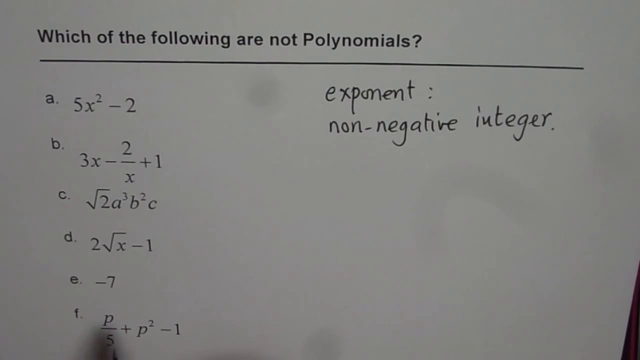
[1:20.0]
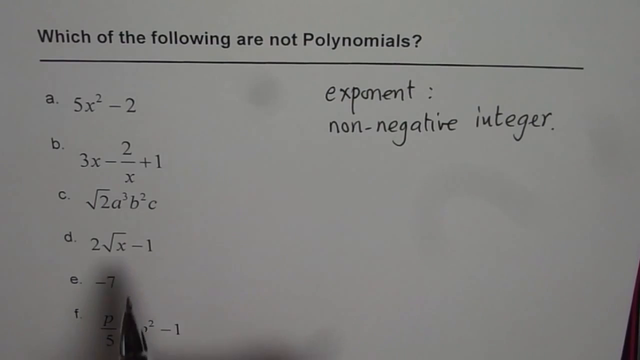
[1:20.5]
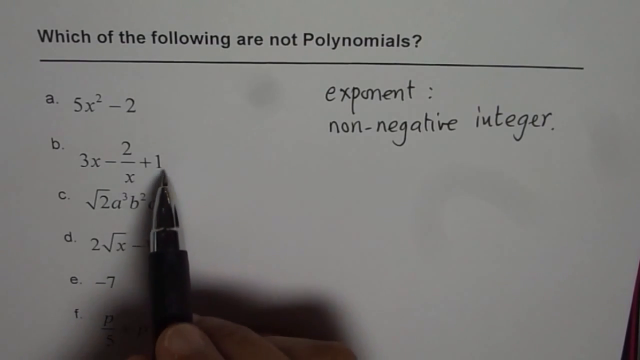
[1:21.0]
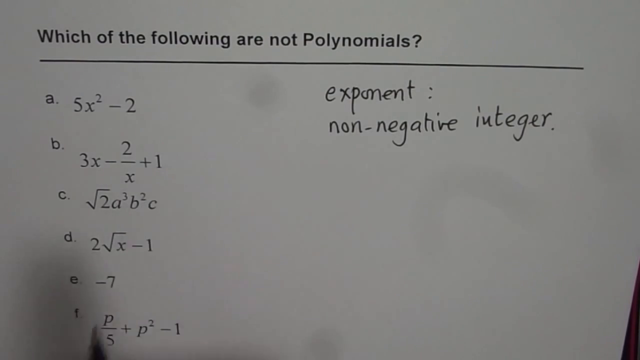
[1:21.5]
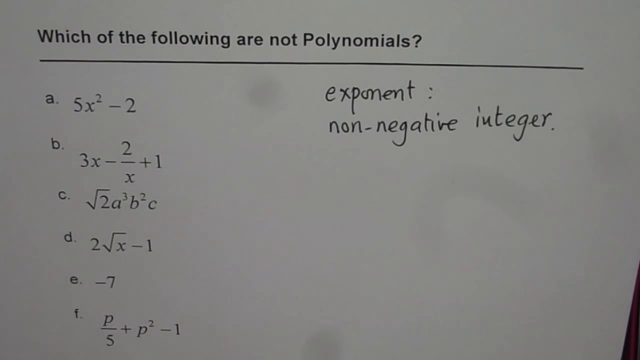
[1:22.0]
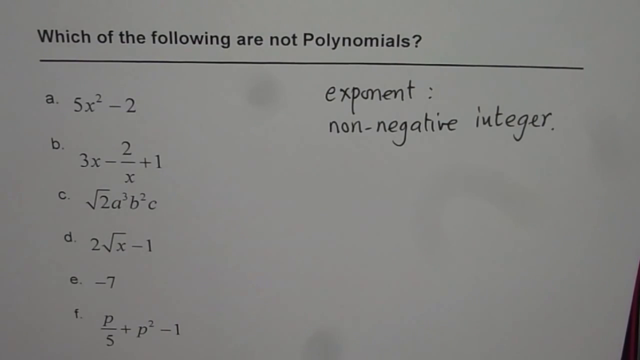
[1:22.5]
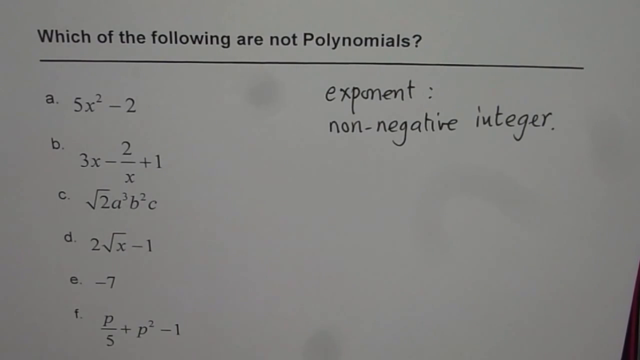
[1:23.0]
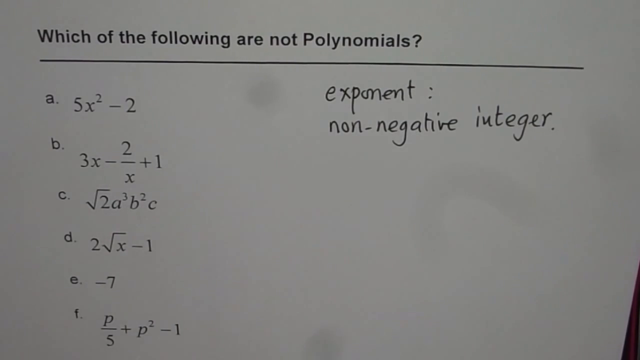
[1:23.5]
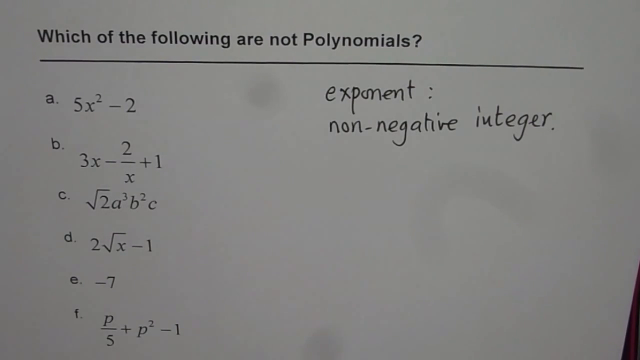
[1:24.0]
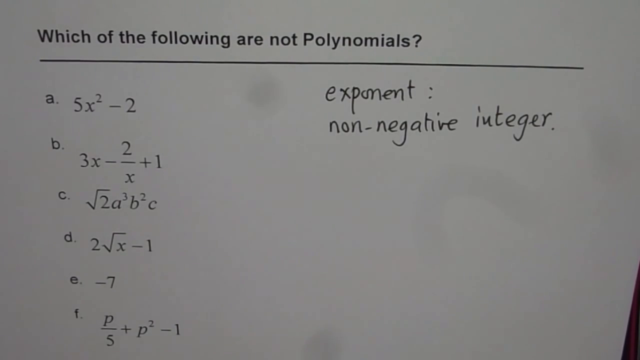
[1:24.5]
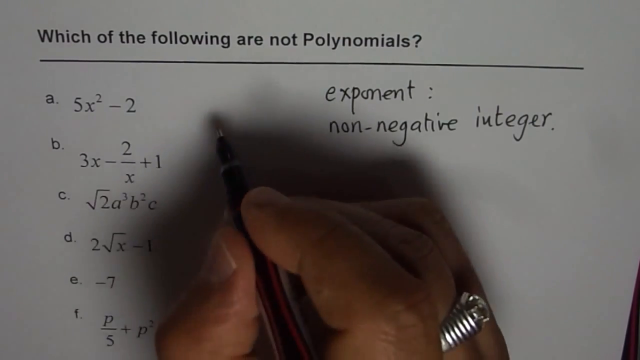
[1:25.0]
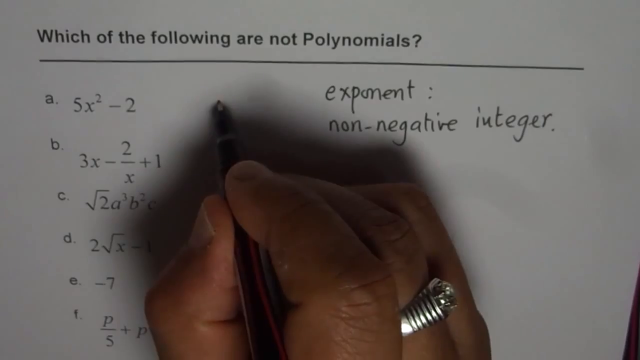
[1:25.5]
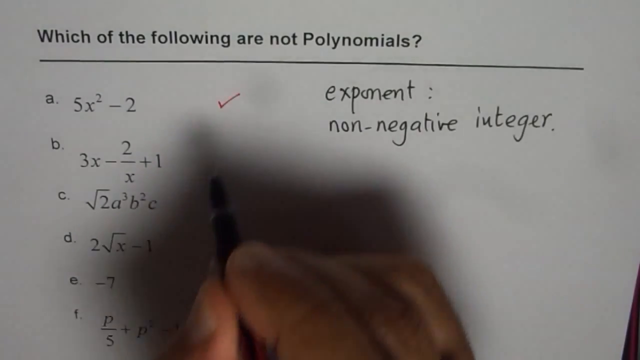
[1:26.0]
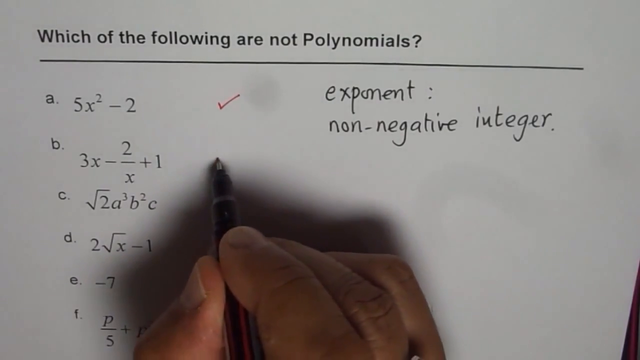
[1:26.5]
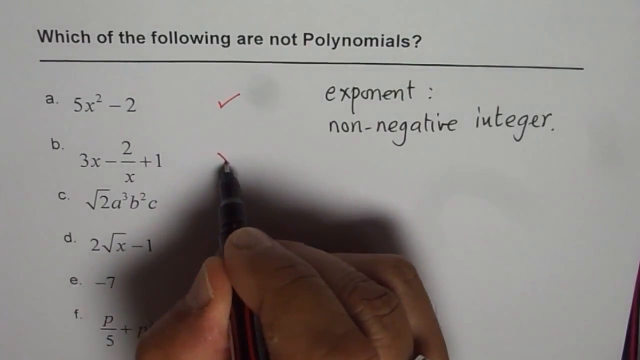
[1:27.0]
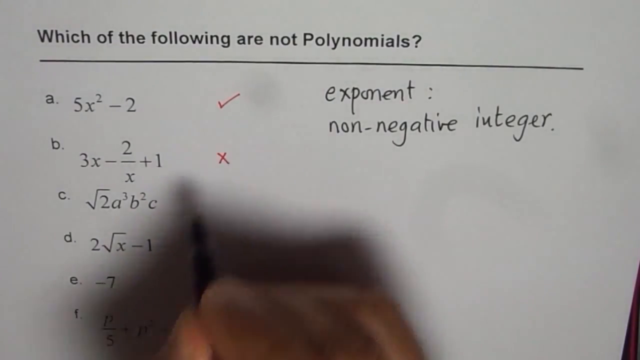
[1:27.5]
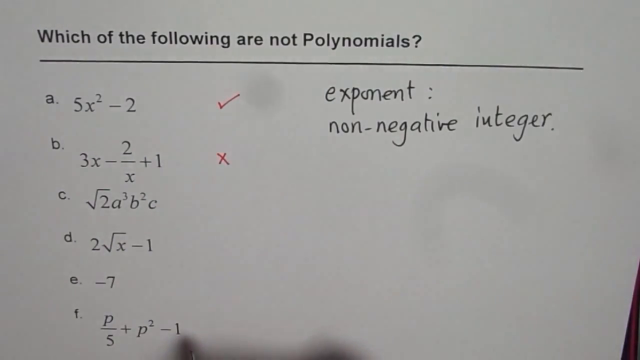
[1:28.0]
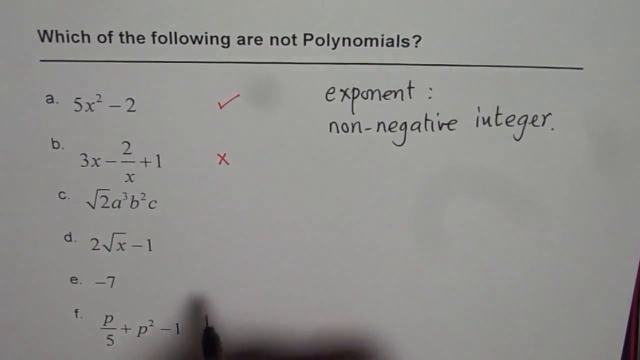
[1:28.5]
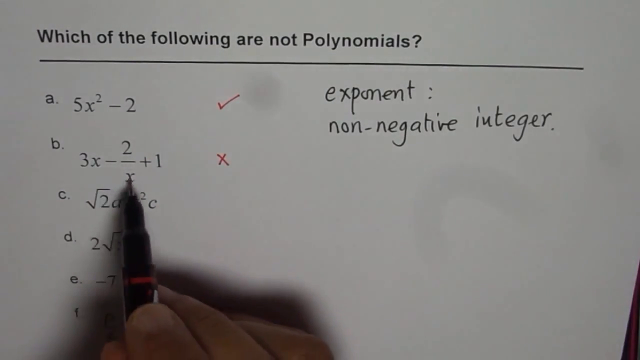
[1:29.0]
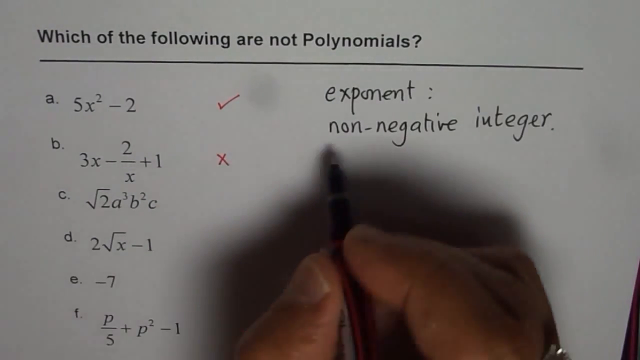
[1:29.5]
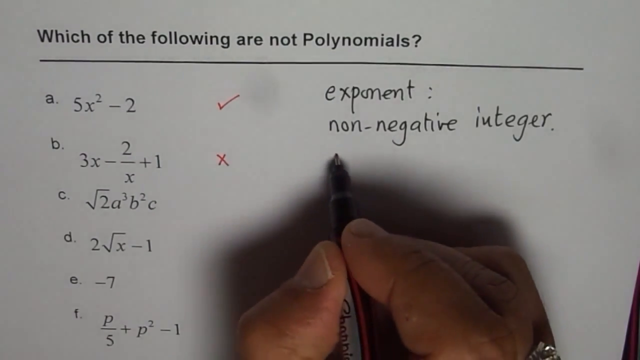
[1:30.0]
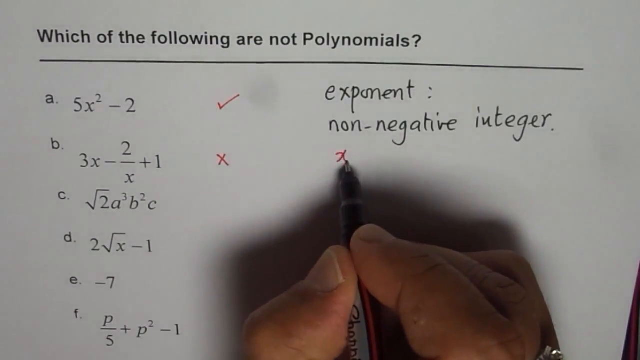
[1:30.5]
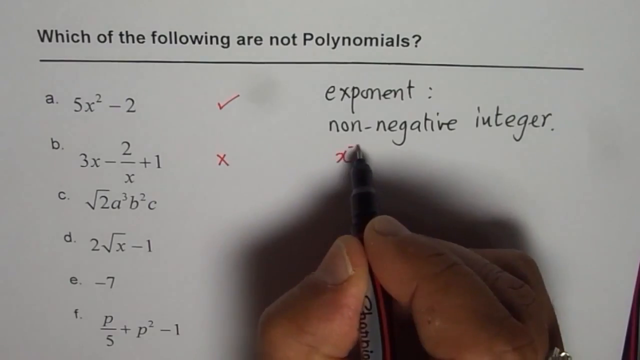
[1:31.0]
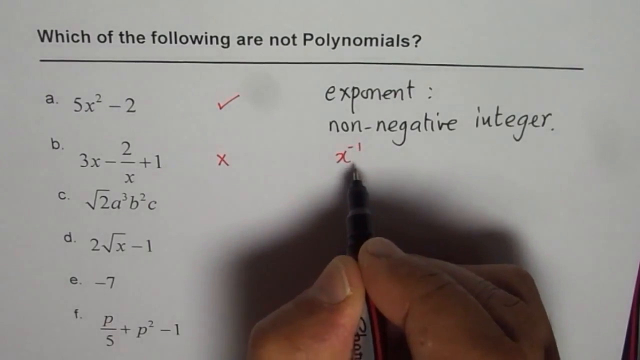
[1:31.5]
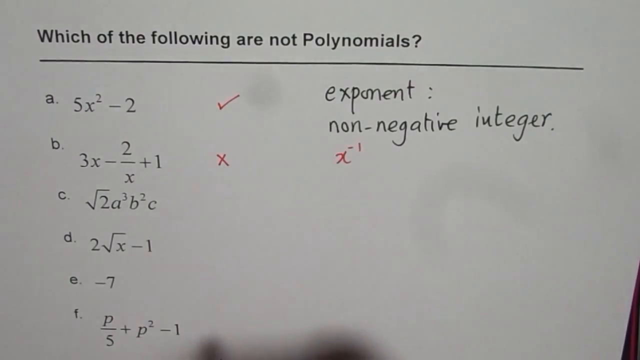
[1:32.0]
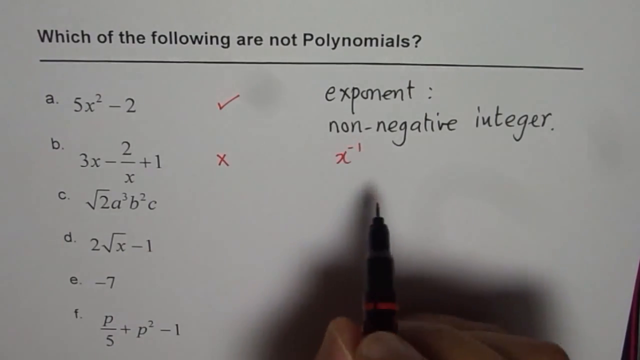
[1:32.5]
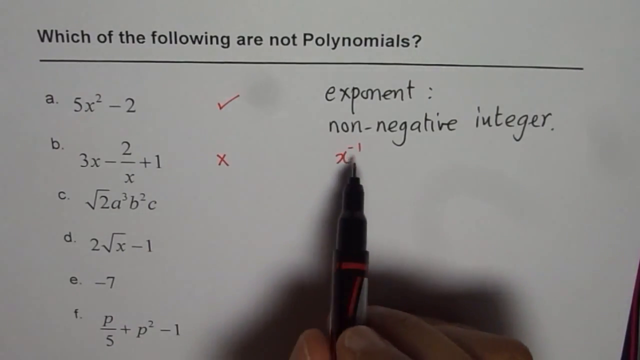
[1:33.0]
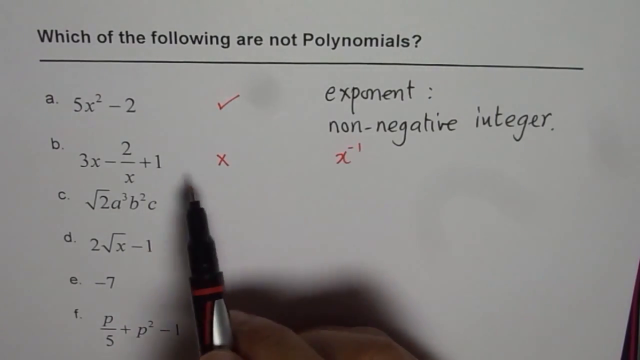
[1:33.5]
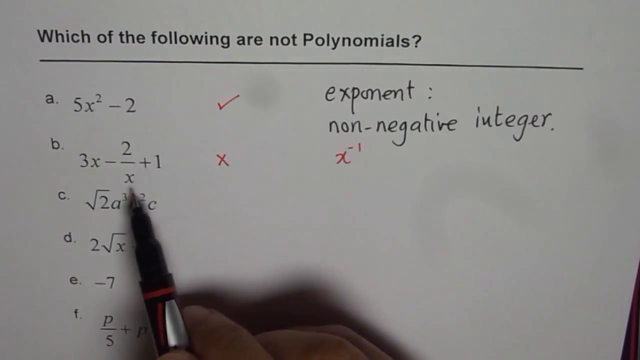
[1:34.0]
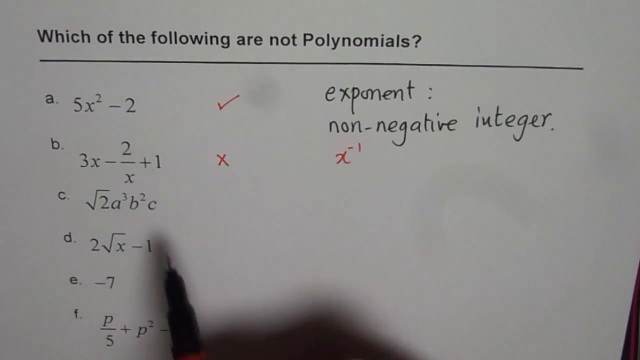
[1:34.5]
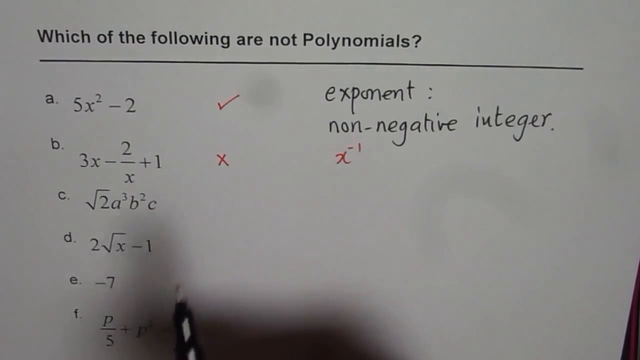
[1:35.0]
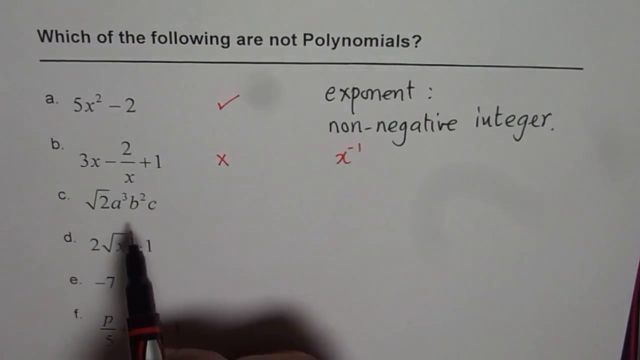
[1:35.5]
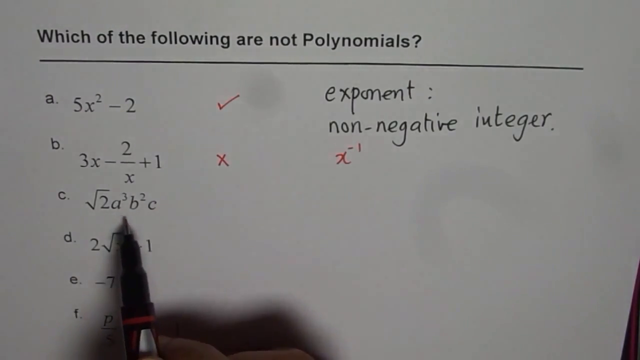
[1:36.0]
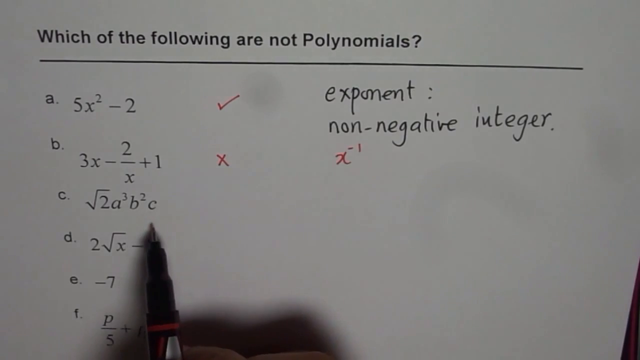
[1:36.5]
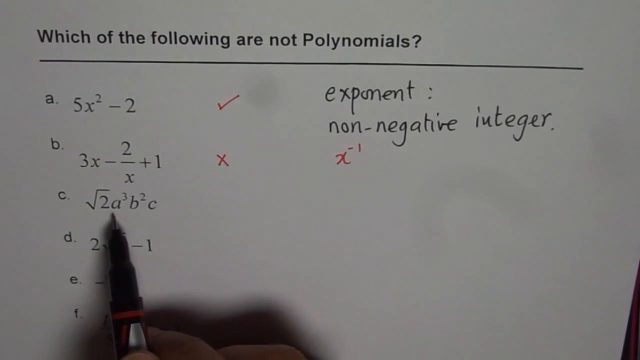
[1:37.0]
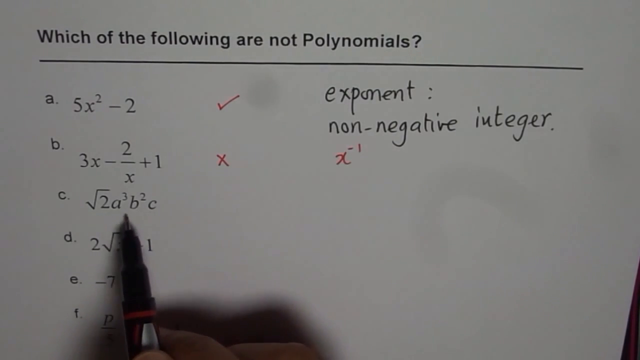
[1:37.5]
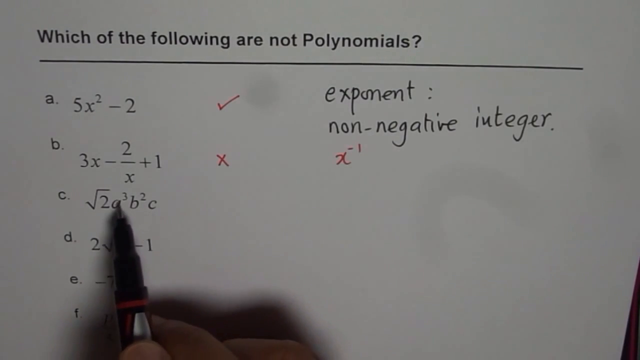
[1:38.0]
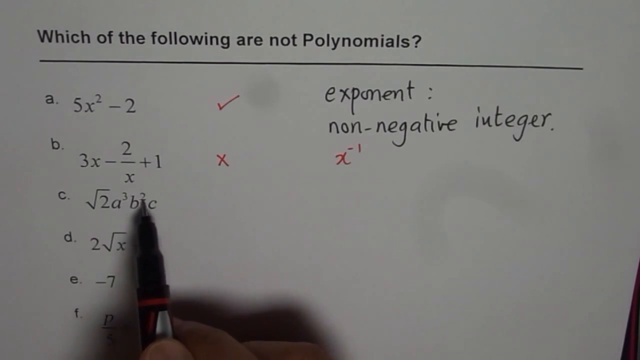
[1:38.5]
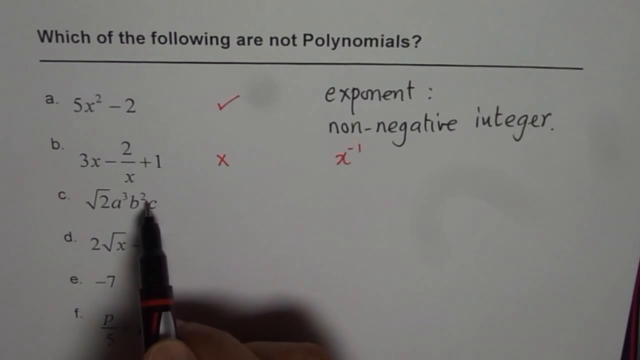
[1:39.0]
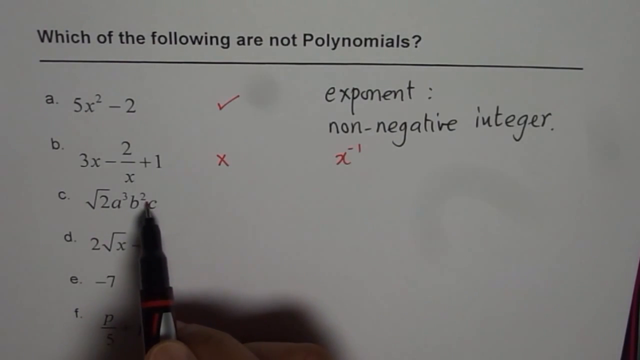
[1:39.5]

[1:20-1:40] The hand and pen come up from the center. The side of the thumb and a little of the thumbprint are visible, along with the side of the pointer finger pressing on the pen and a bit of its fingernail, and a little of the top and side of the middle and ring fingers. The middle finger, on the right side, wears a big silver ring with a diamond. The pen comes in from the bottom and puts a red check mark next to A. This pen looks a little different at the tip, apparently with a black casing around it instead of silver. It then puts a red X next to B. A, 5x minus 2, has a check, and B, 3x minus 2 over x plus 1, has a red X. The pen comes back in, points at the second x in B, and then, under "non-negative integer", writes x with negative 1 in the power position. It then goes back to the A, B and C expressions, pointing back and forth at a 3 and a 2.